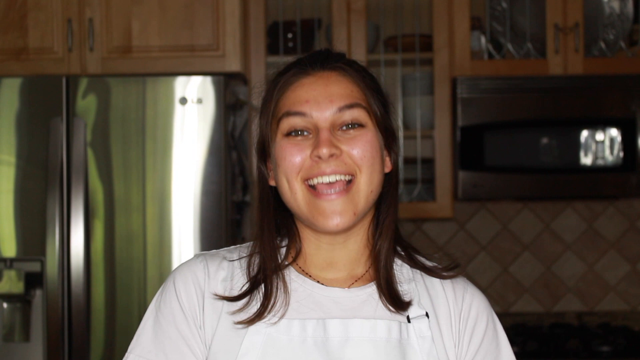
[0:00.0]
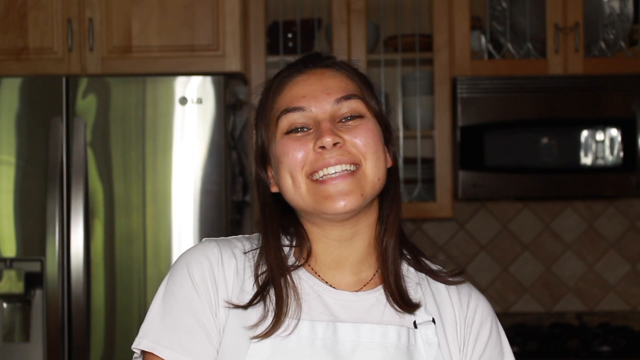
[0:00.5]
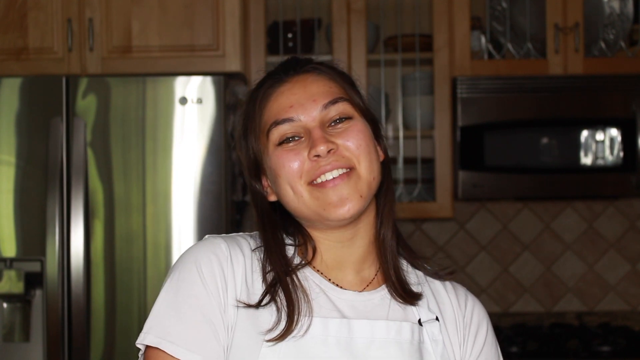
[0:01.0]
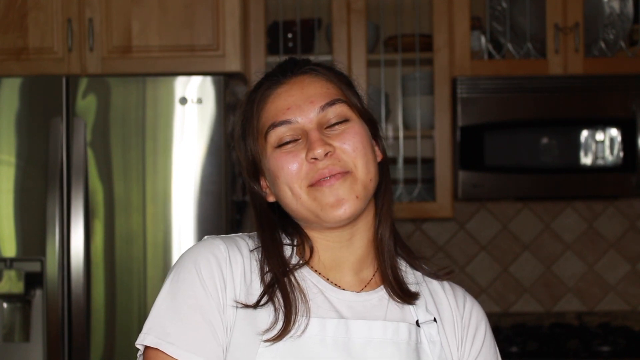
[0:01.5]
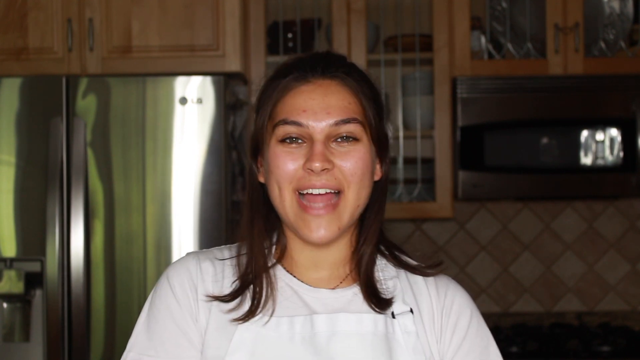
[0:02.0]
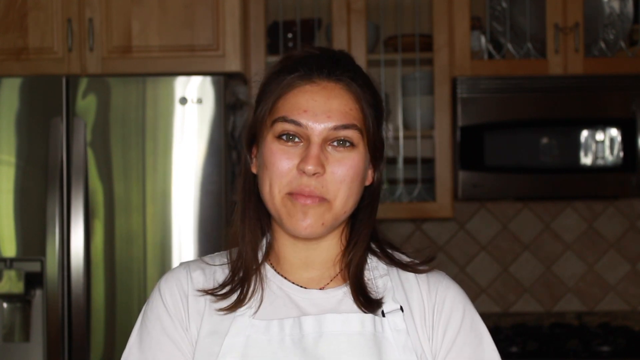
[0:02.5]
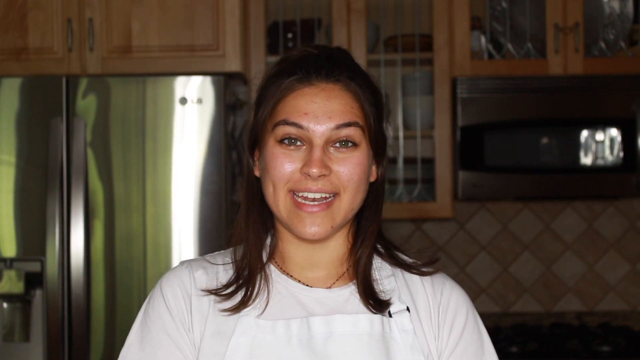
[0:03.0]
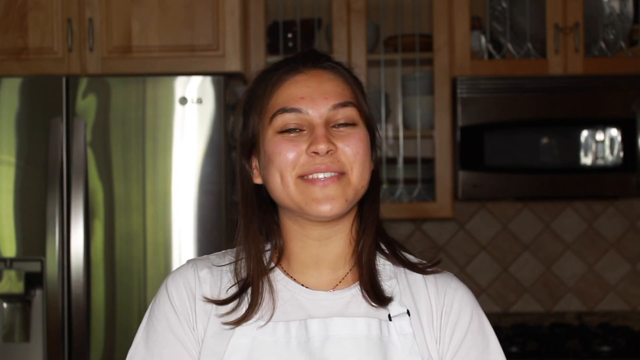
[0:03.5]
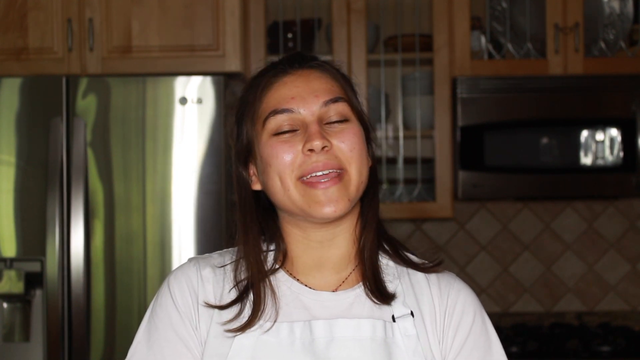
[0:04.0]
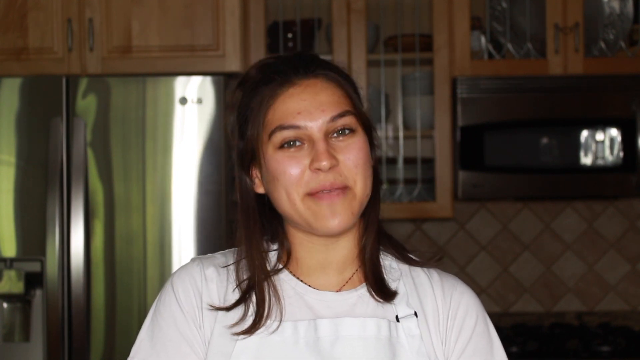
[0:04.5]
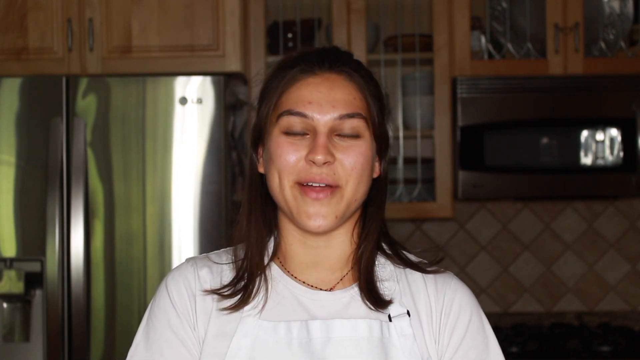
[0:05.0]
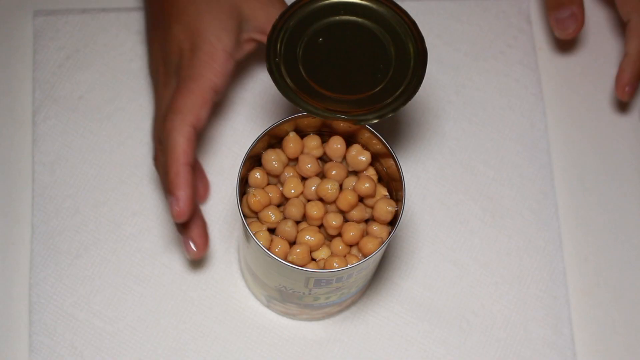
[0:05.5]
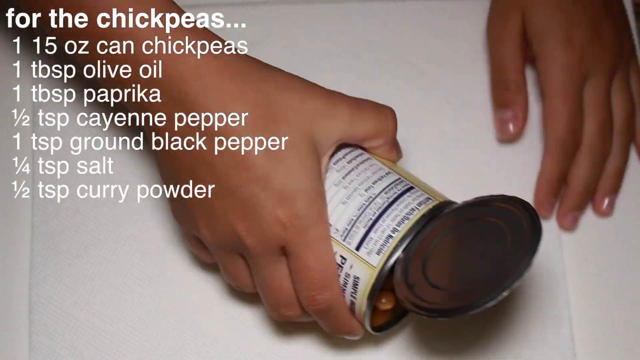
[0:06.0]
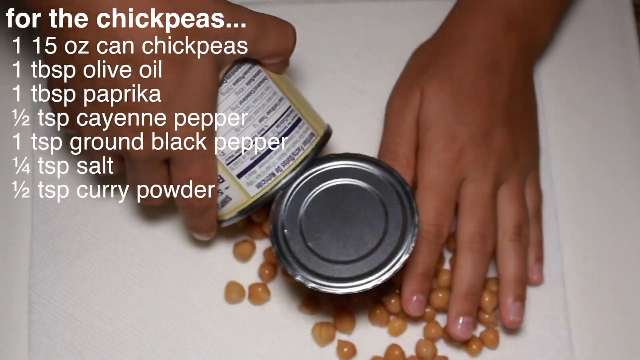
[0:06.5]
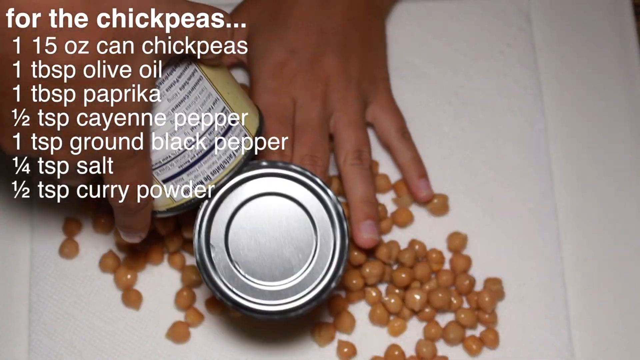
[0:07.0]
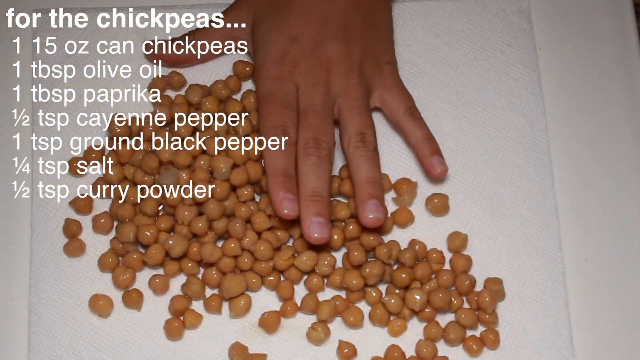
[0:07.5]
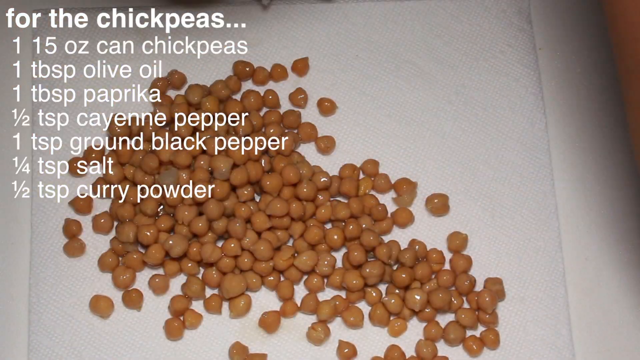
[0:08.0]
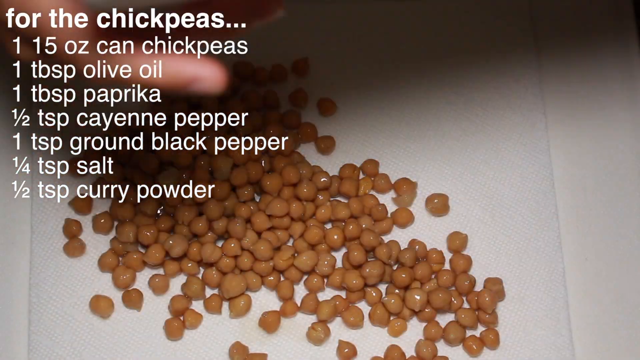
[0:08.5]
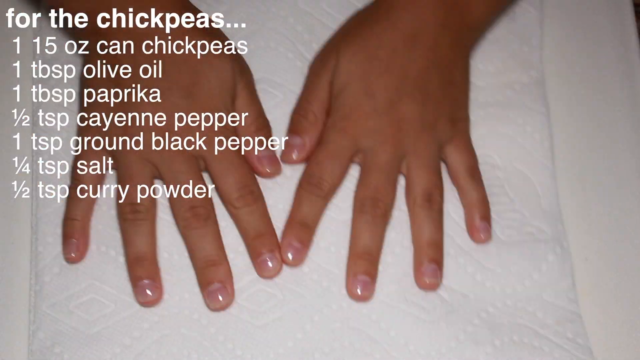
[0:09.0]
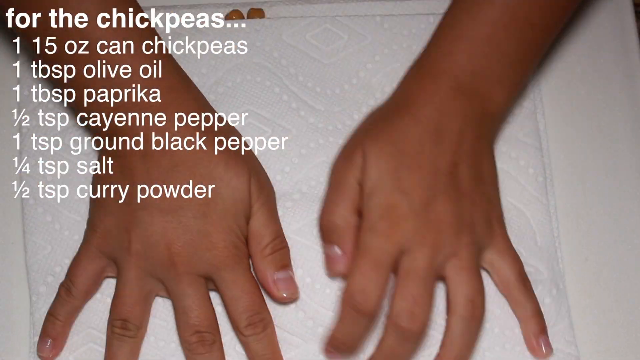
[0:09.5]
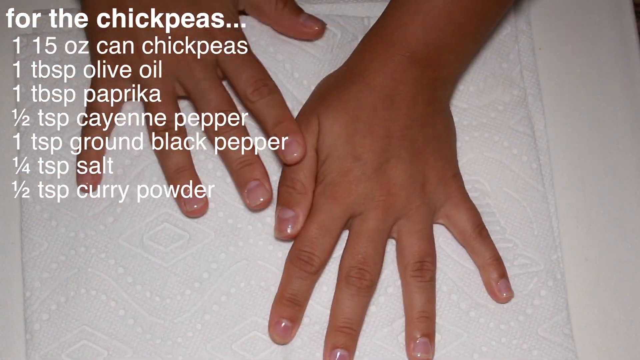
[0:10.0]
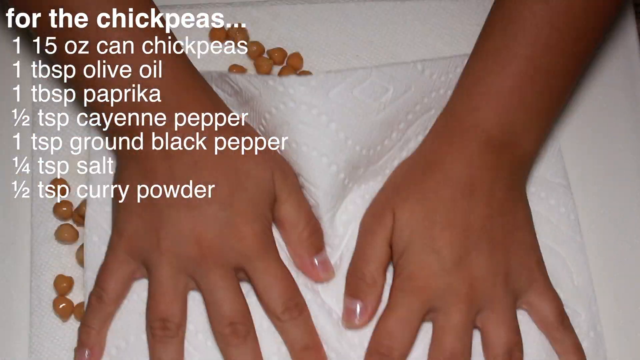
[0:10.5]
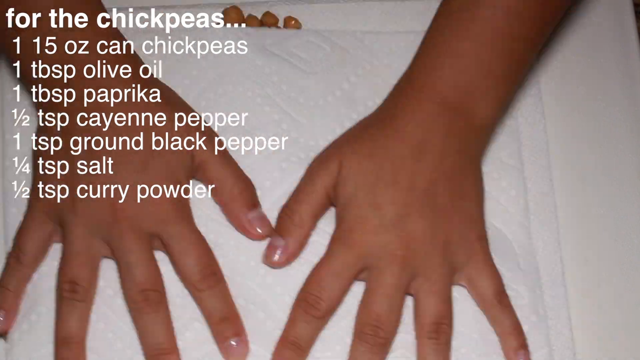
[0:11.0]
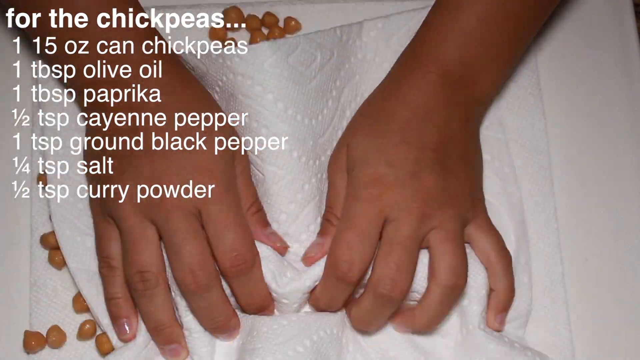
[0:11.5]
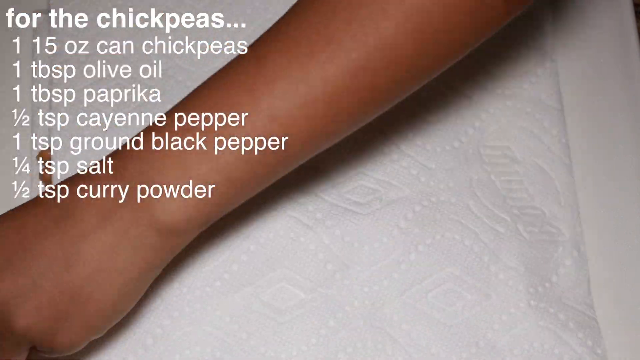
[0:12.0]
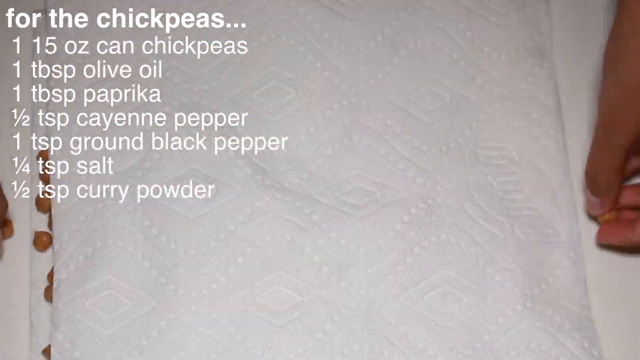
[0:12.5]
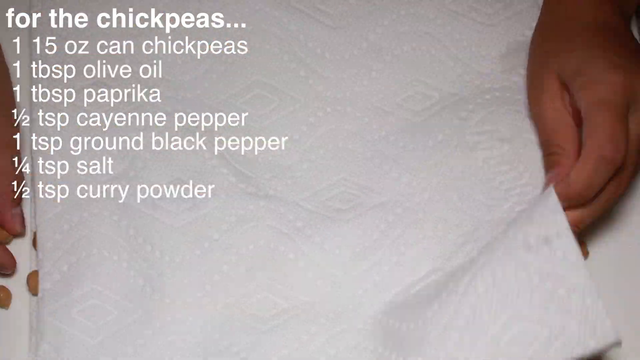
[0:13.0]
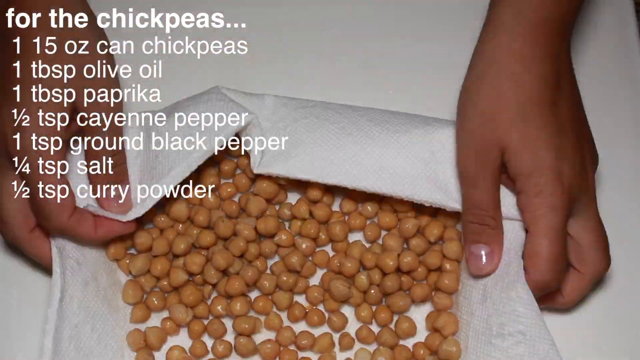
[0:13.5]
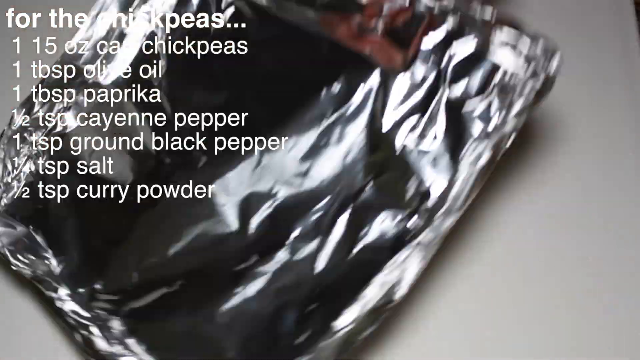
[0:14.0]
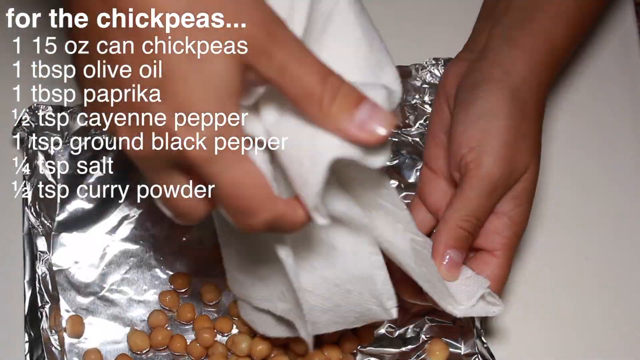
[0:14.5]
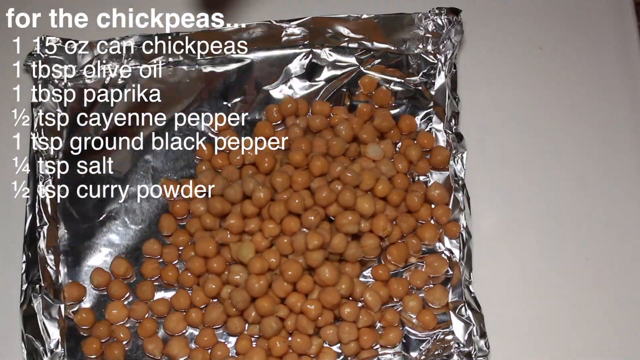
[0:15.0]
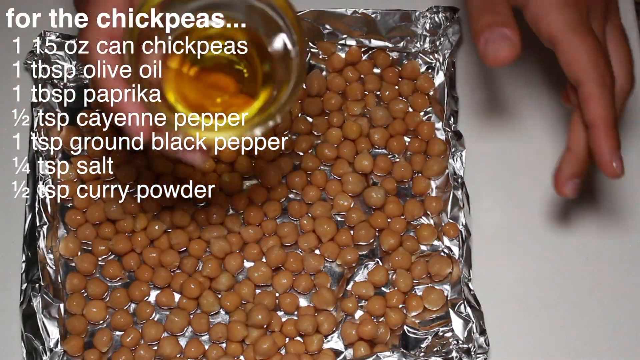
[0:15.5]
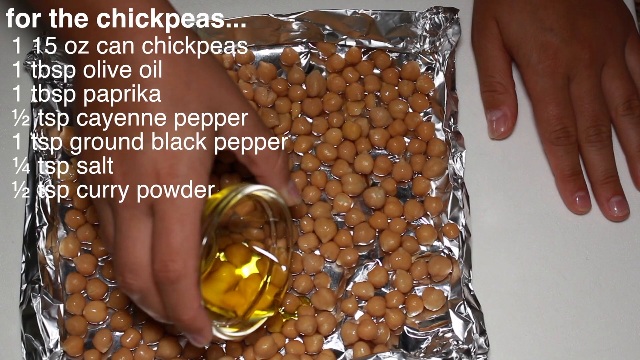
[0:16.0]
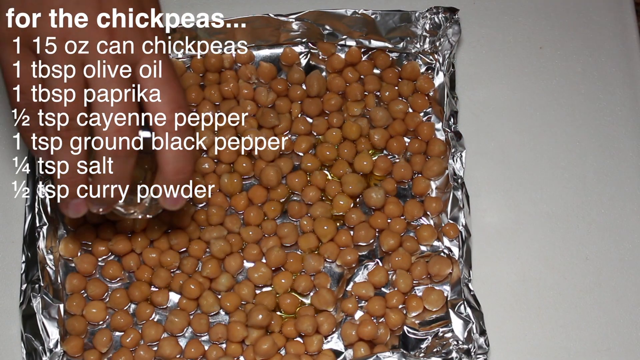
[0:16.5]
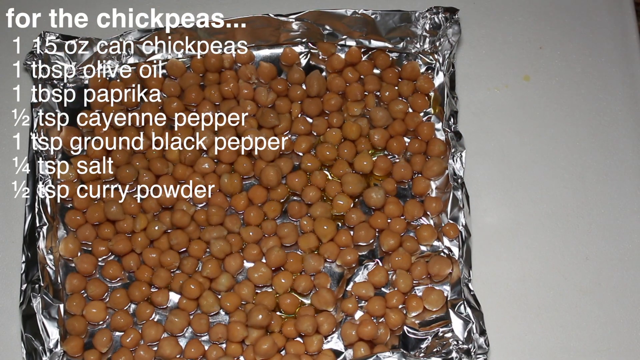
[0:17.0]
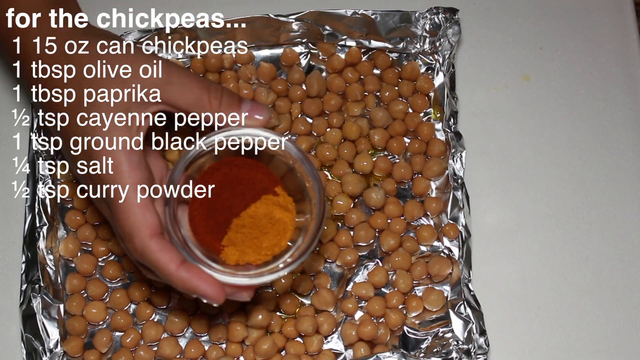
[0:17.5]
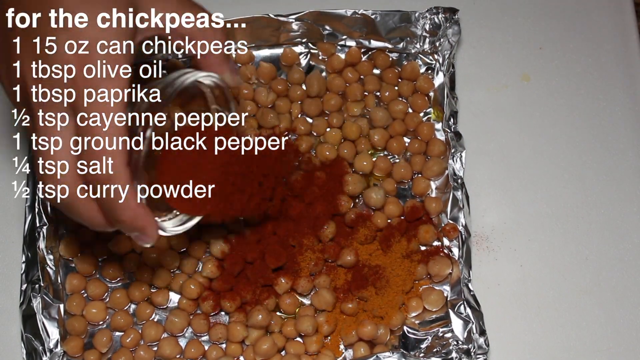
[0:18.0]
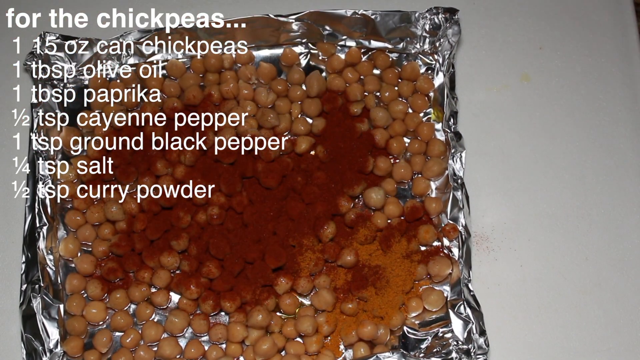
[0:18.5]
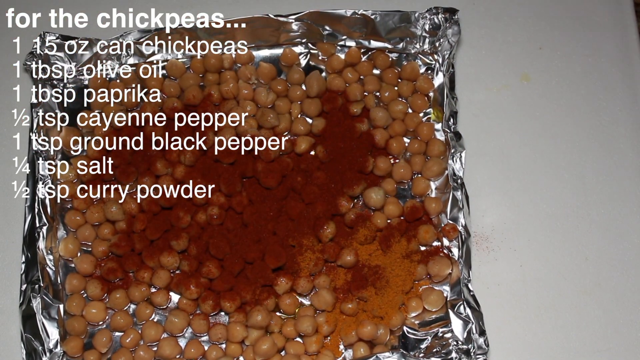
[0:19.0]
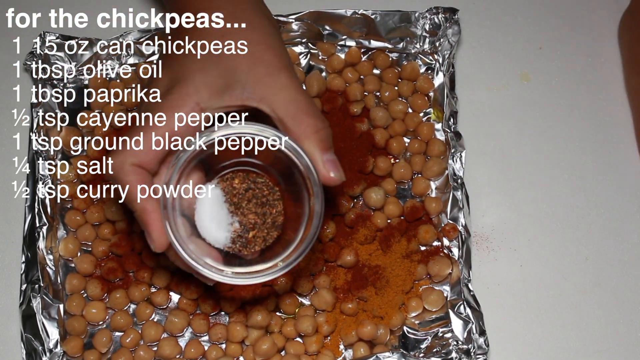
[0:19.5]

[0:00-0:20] A white woman who appears to be 22 to 27 years old, with hair that comes off her shoulders and a white top, talks while looking directly at the camera with a big smile on her face. She is inside her kitchen; in the top right corner there is a glimpse of a black microwave with some lights shining on it. She introduces her recipe, which looks like it involves chickpeas. The ingredients include a can of chickpeas, a tablespoon of olive oil, a tablespoon of paprika, half a tablespoon of cayenne pepper, one tablespoon of ground black pepper, a quarter tablespoon of salt and half a tablespoon of curry powder. She drains chickpeas from a can, puts them between two white paper towels, and uses her hands to roll and pat the chickpeas dry.